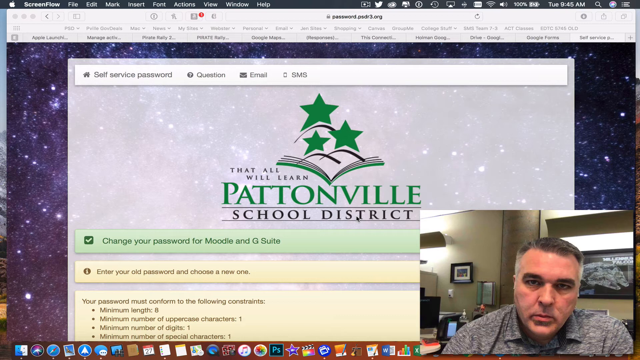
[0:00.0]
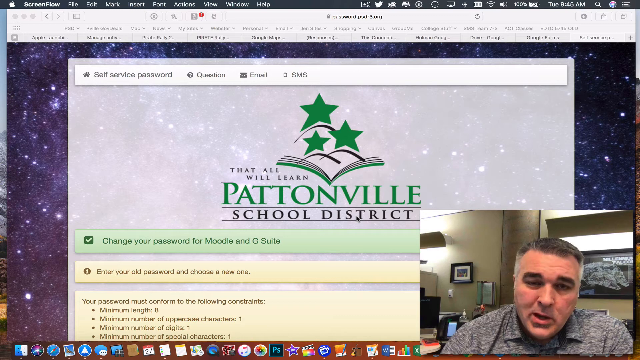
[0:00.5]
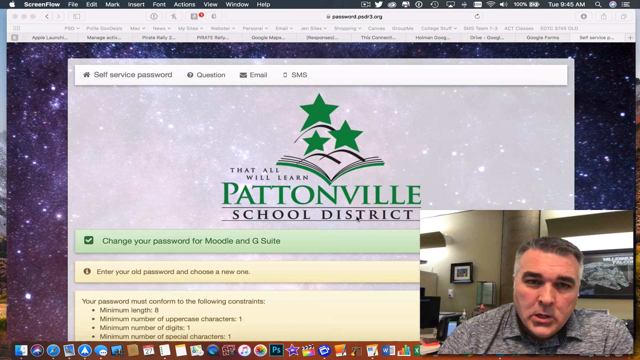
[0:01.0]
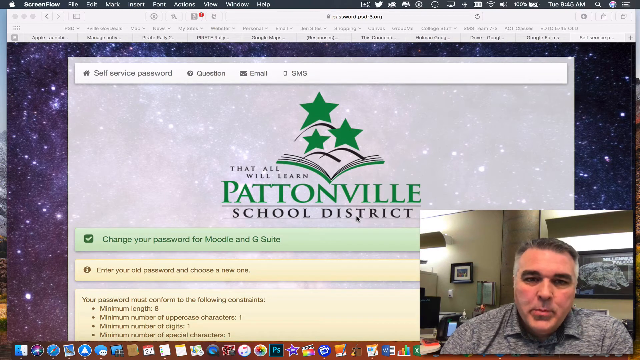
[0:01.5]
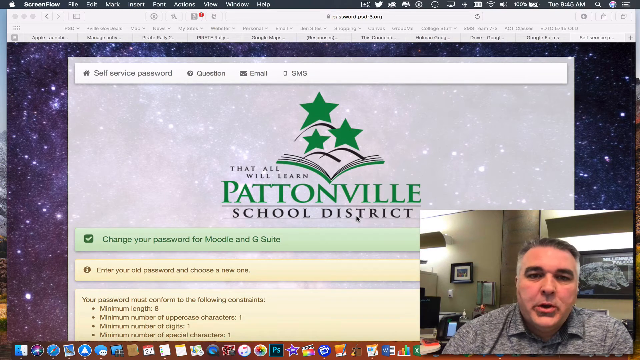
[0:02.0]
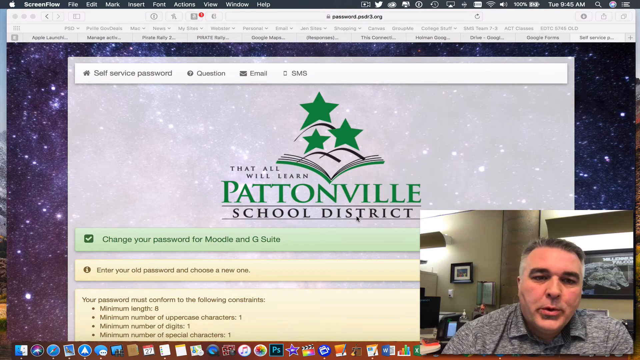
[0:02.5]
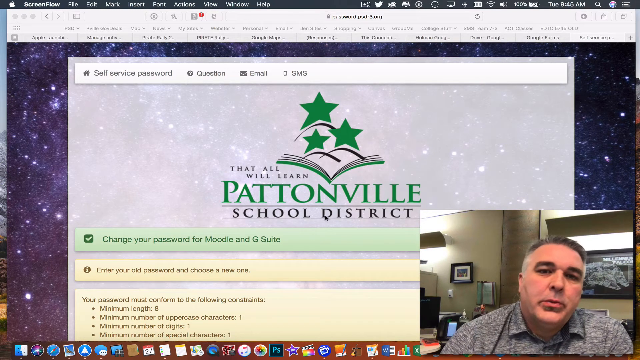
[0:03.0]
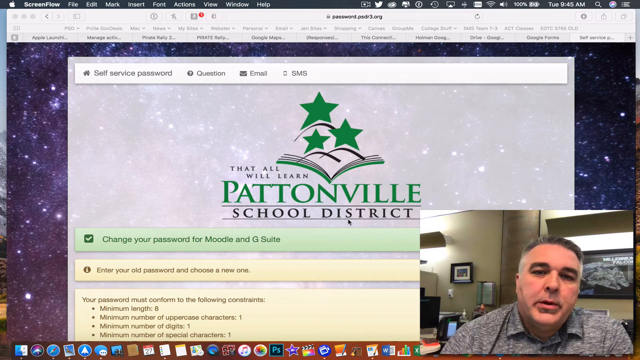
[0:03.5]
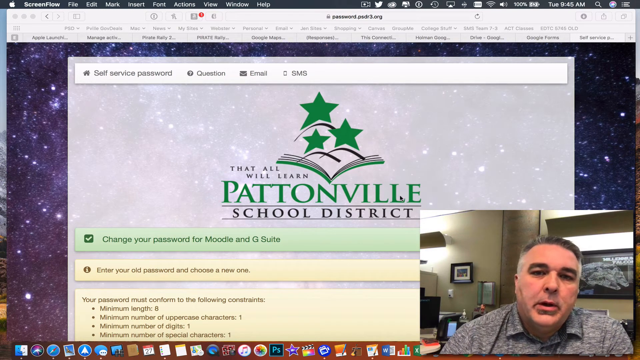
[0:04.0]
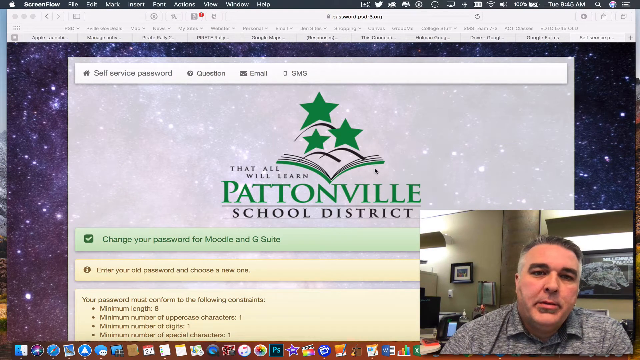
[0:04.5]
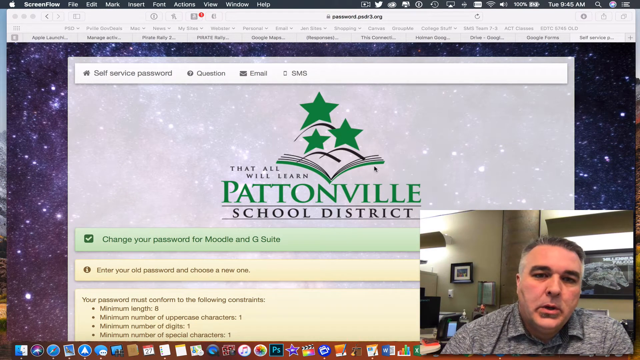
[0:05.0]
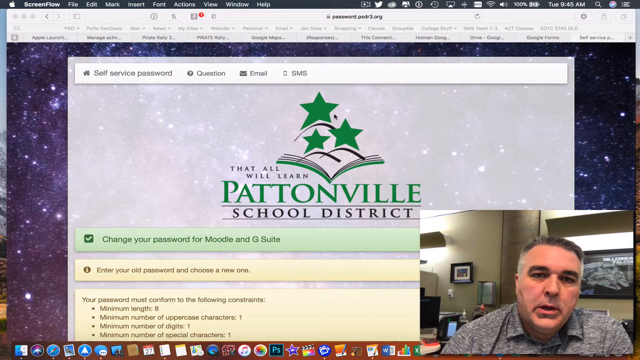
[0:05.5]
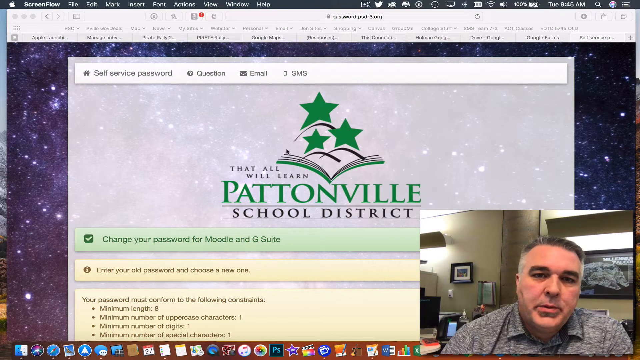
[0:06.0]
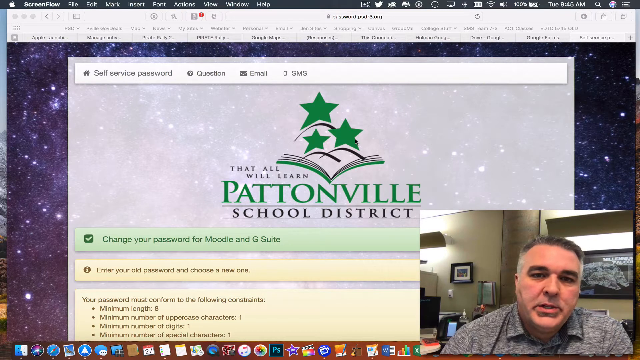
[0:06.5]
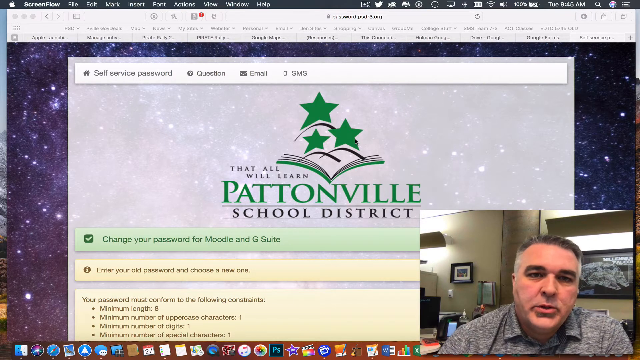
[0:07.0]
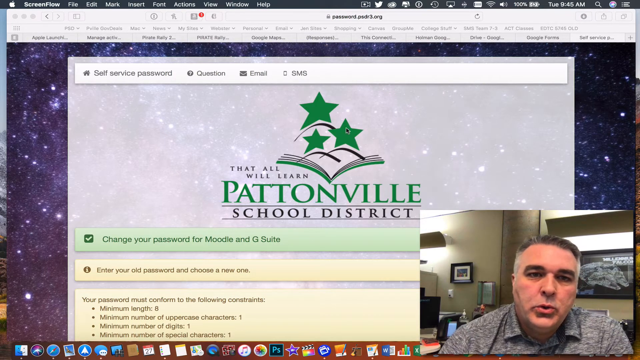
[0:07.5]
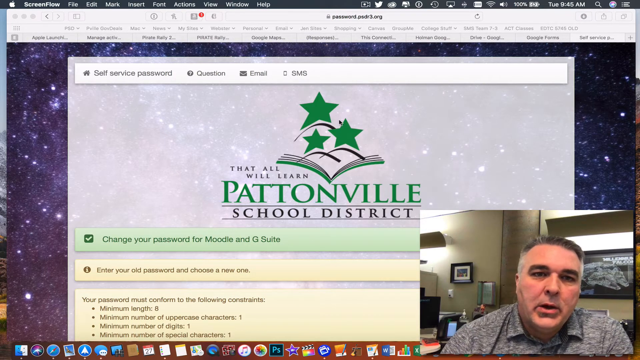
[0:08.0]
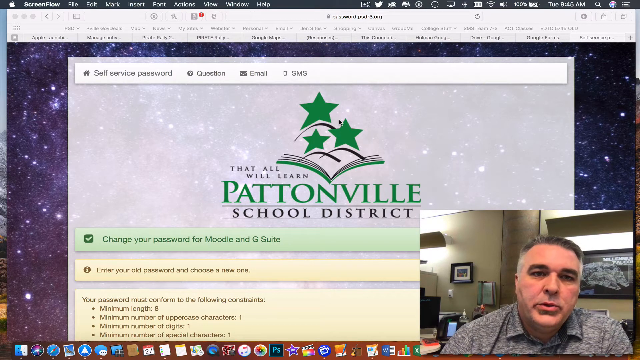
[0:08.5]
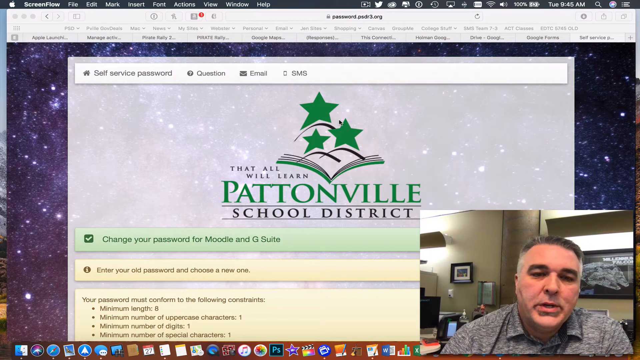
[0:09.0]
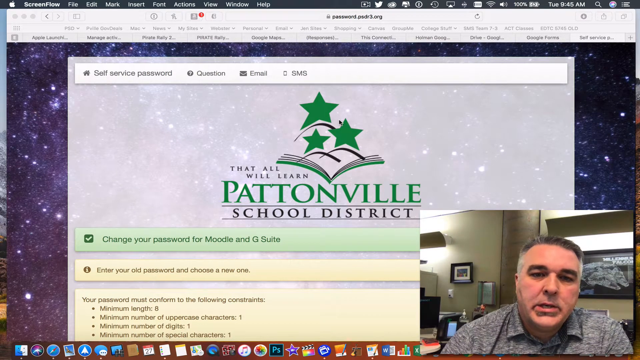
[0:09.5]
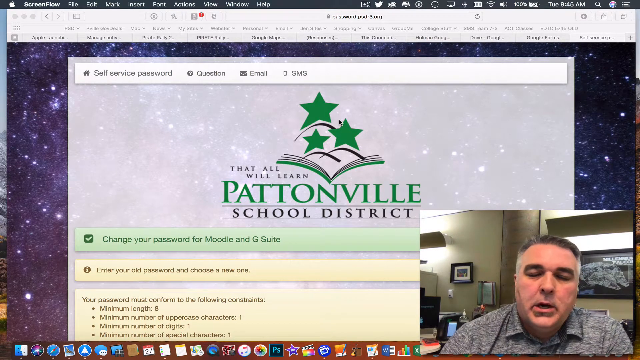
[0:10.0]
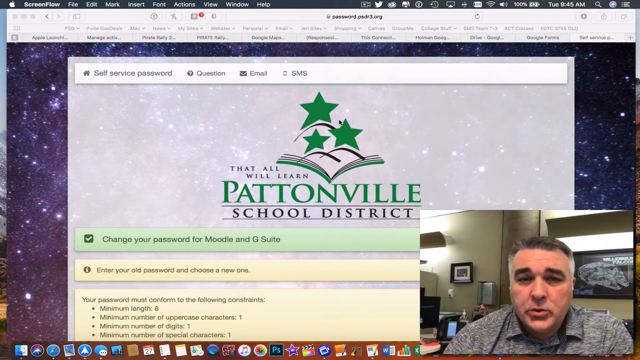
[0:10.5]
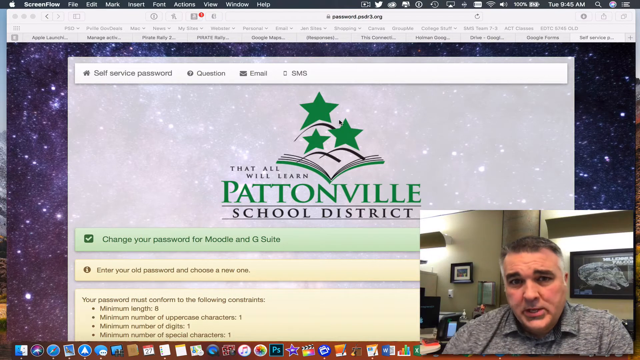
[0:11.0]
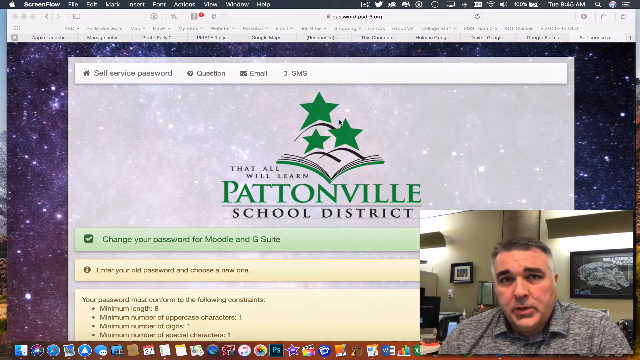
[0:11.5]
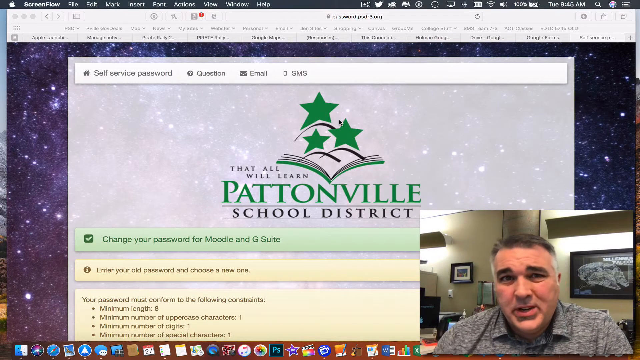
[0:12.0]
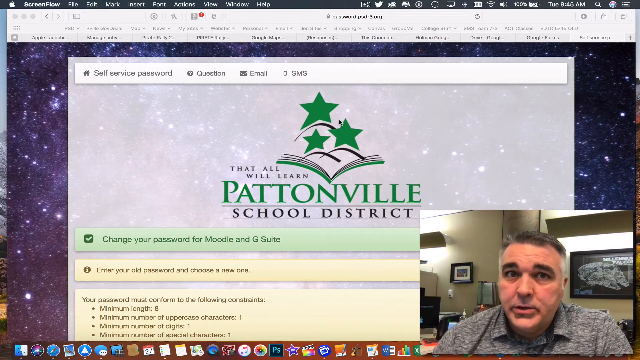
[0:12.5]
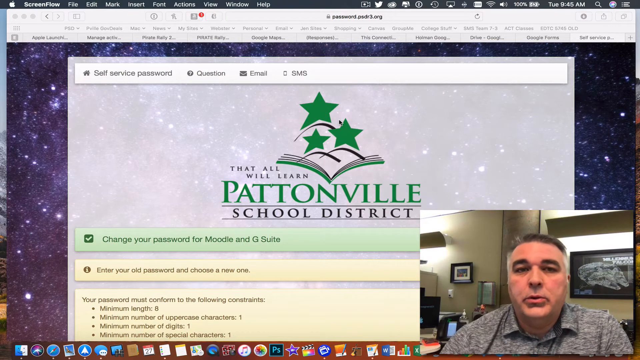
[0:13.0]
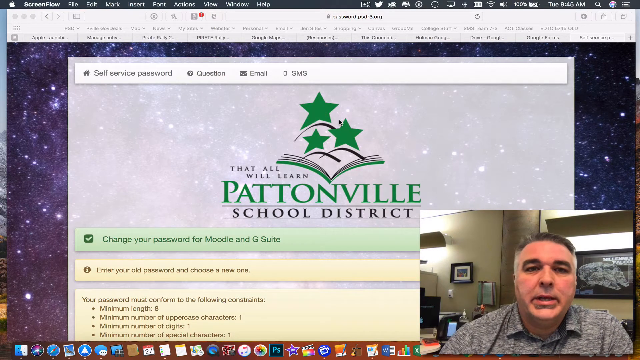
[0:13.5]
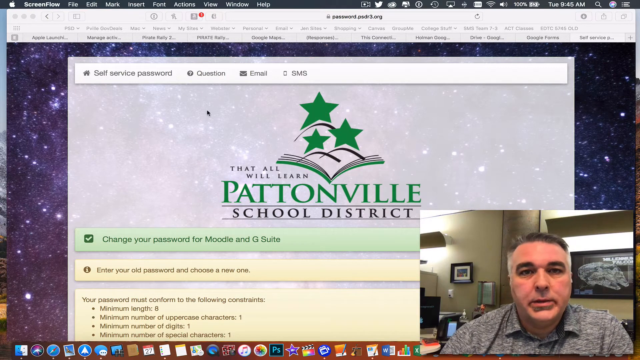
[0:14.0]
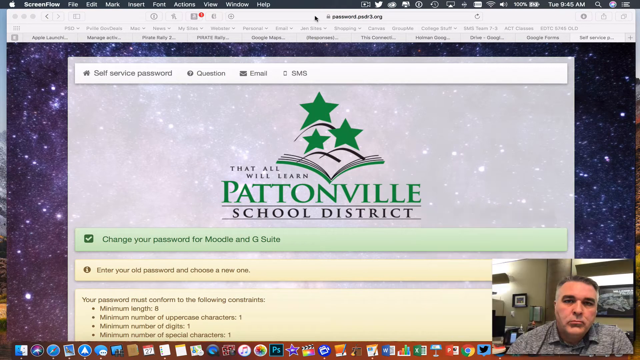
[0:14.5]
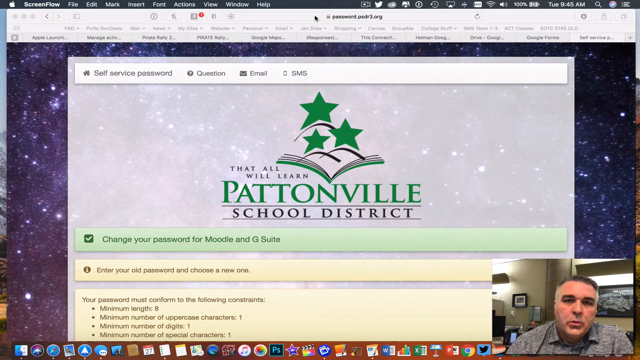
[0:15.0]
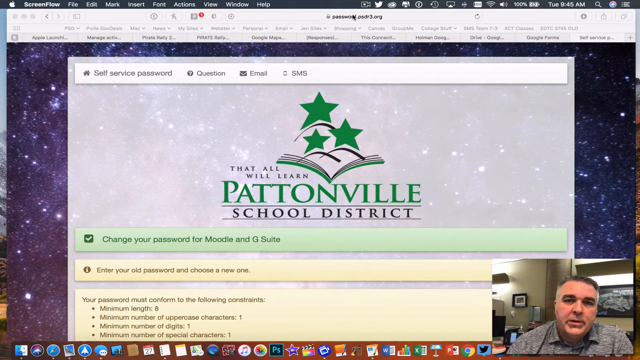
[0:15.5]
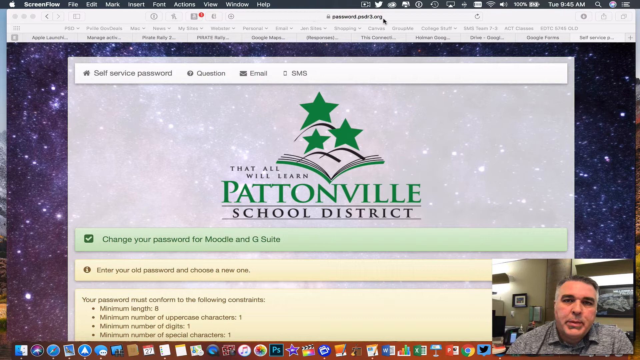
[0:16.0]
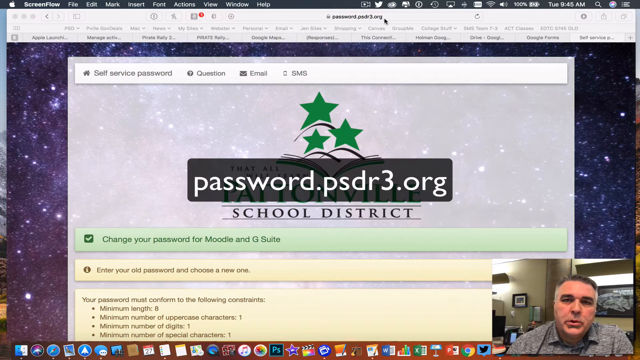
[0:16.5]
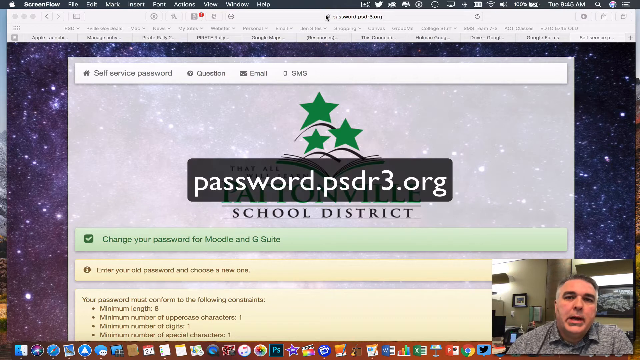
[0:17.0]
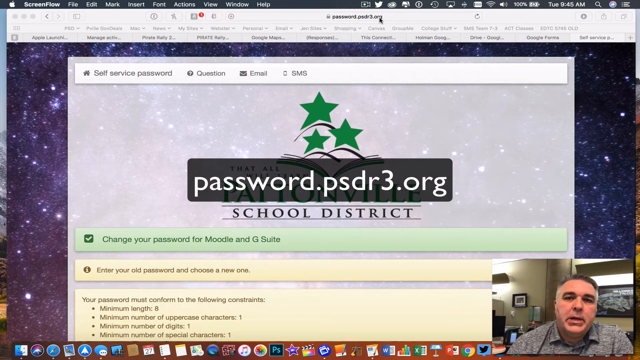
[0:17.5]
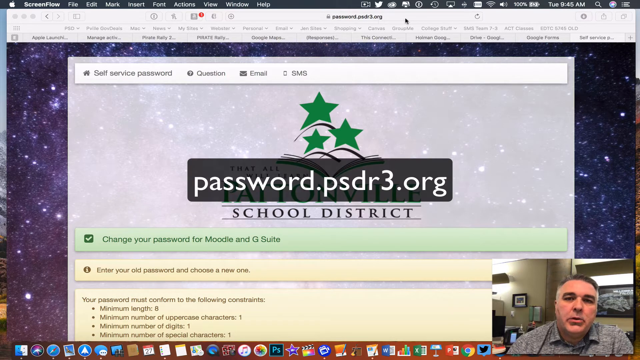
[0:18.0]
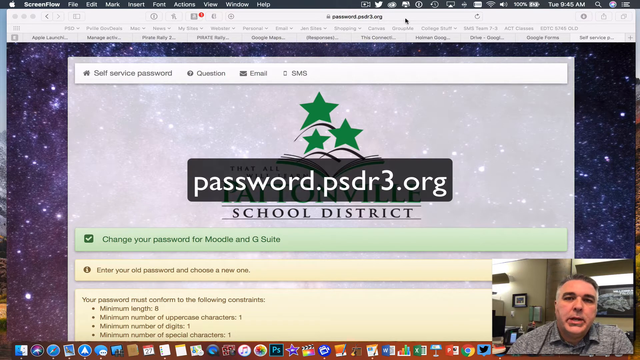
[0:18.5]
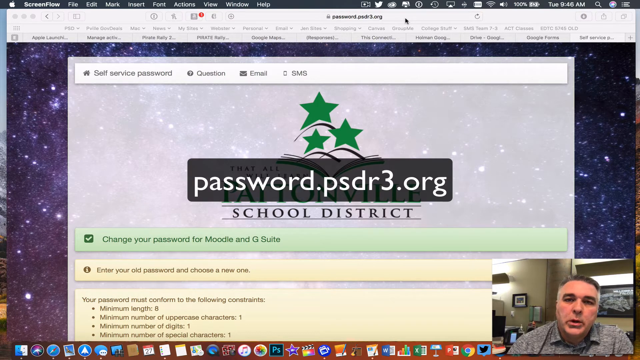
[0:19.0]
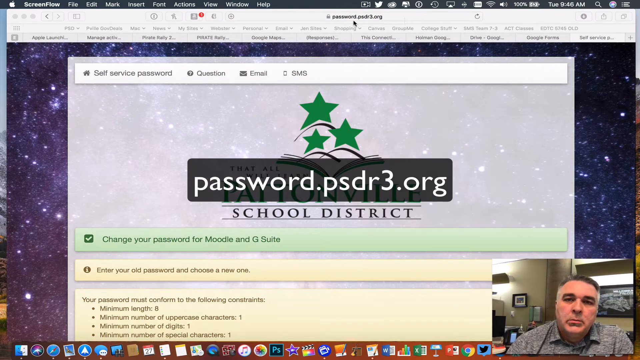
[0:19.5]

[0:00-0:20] The video is from the Pattonville School District: the word "Pattonville" is in green and "school district" is in black. A man appears in the lower right-hand corner, facing the screen; it is apparently his screen that he is sharing. He has salt-and-pepper hair, with more salt than pepper on the sides, wears a gray collared shirt, and is talking. The mouse moves around the logo above the school district name, an open book with three stars coming out of it. To the left of the logo, in black, is the text "that all will learn." Underneath the school district name is the text "change your password from Moodle to G-Suite," followed by "enter your old password and choose a new one. Your password must conform to the following constraints," and then "minimum length eight, minimum number of uppercase characters one, minimum number of digits one, minimum number of special characters one." The web address "password.psdr3.org" is shown.